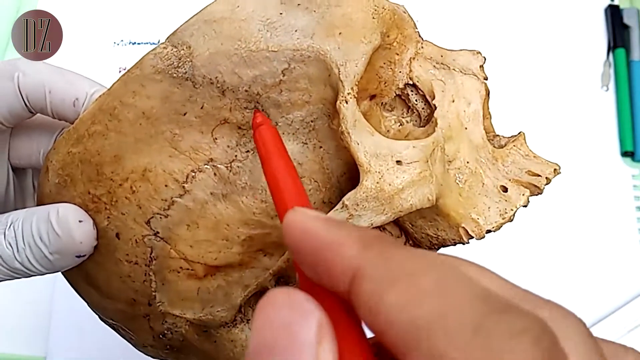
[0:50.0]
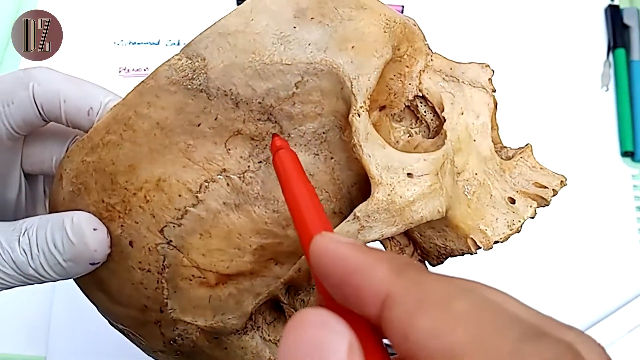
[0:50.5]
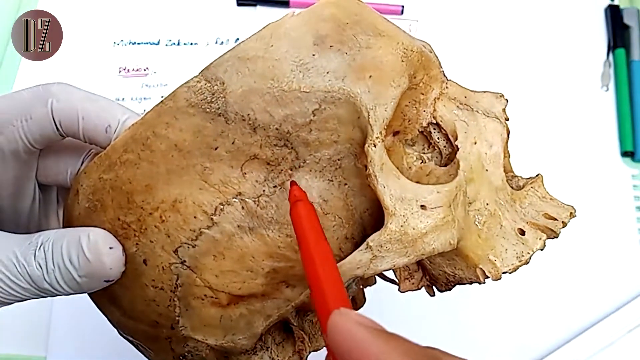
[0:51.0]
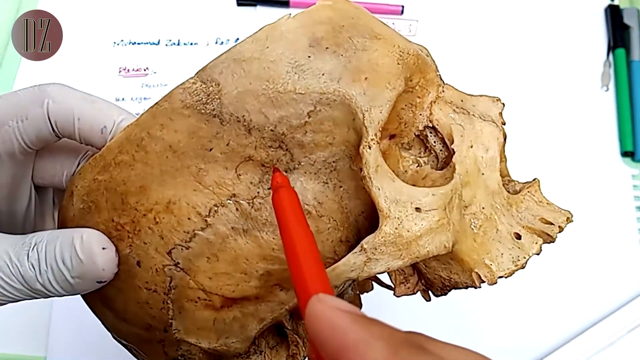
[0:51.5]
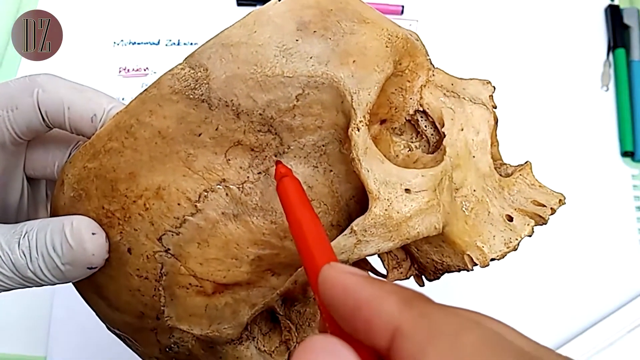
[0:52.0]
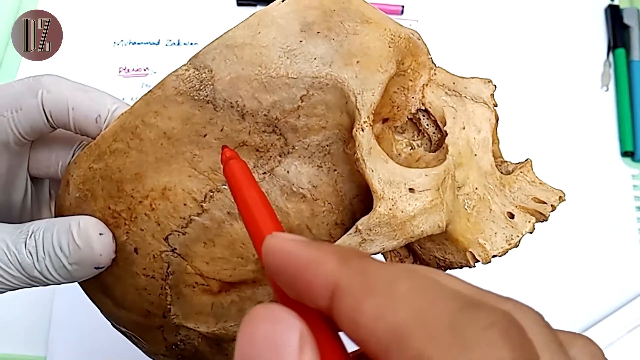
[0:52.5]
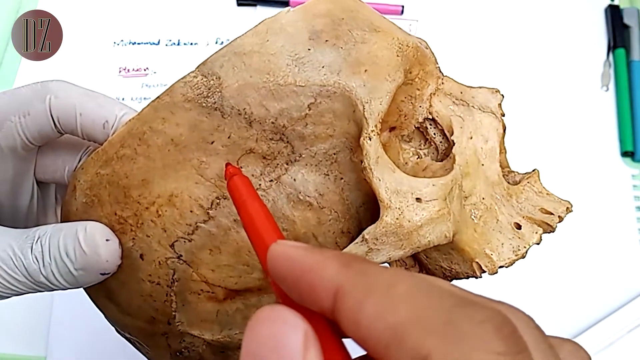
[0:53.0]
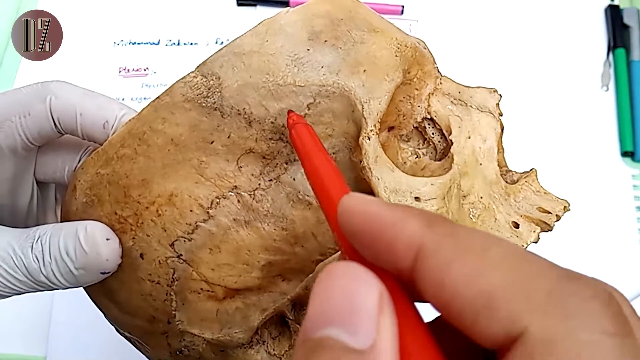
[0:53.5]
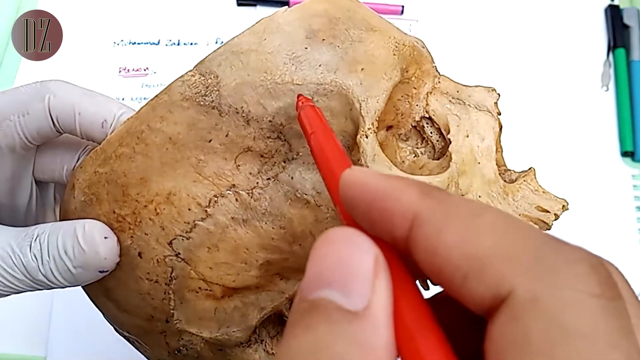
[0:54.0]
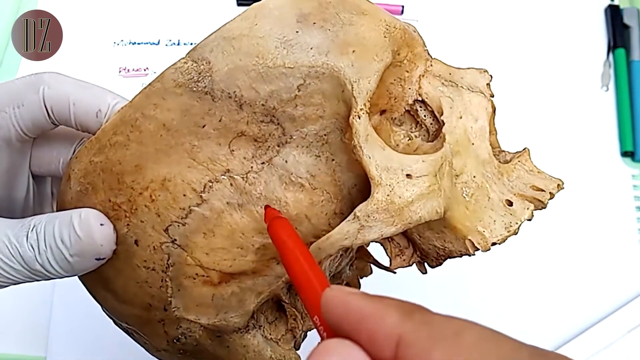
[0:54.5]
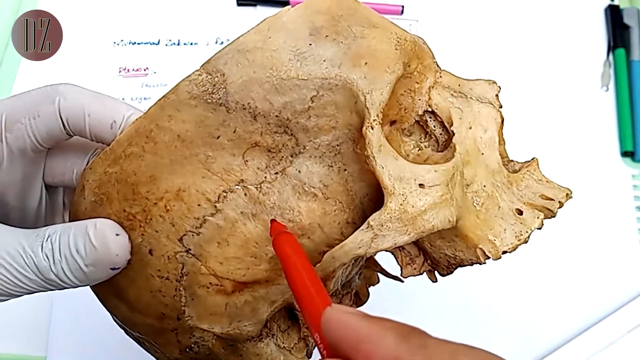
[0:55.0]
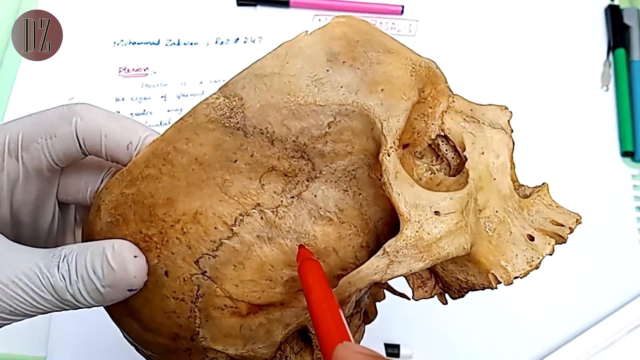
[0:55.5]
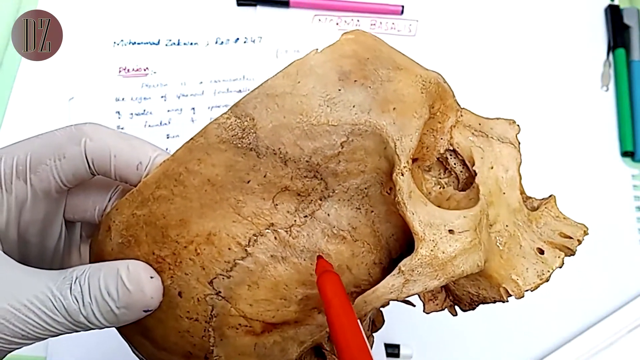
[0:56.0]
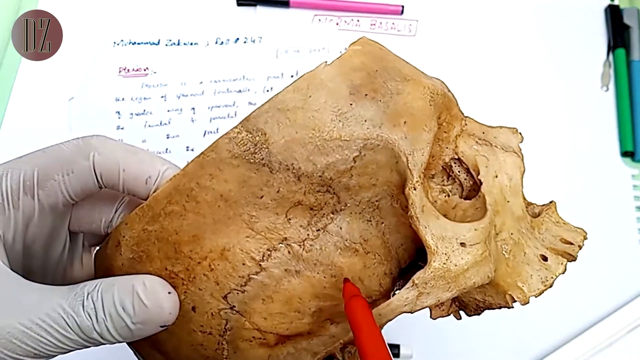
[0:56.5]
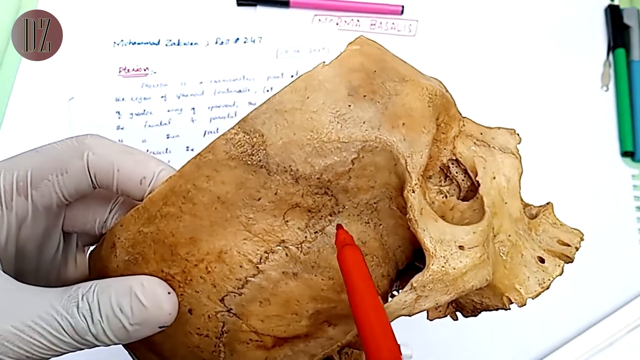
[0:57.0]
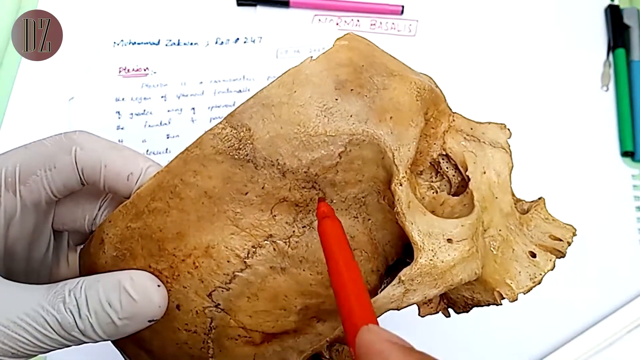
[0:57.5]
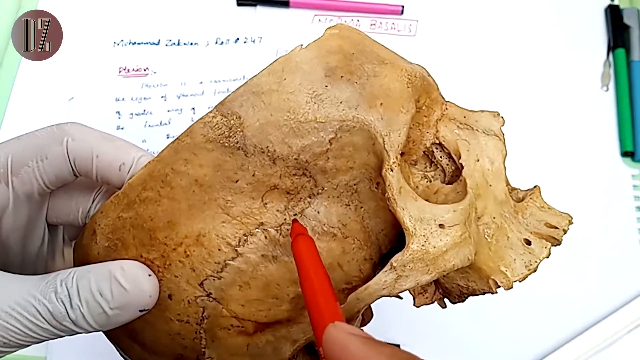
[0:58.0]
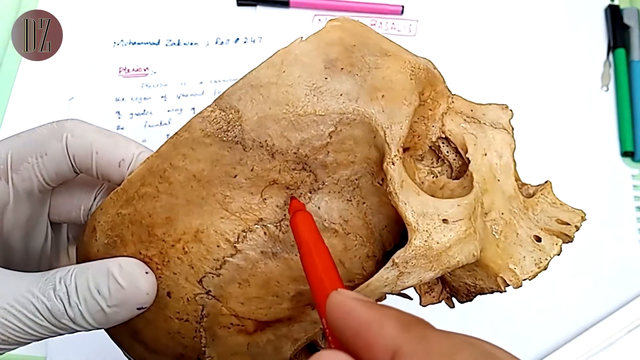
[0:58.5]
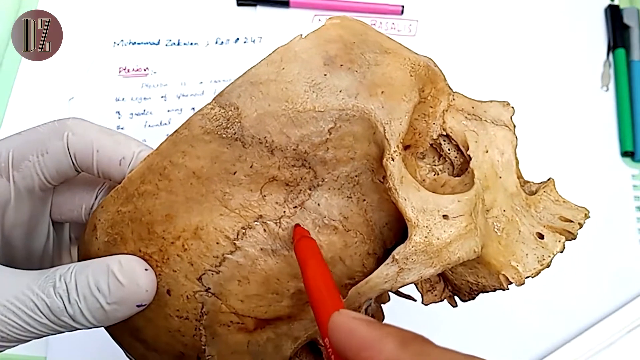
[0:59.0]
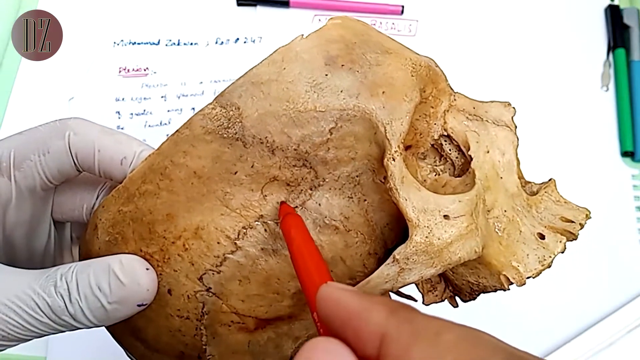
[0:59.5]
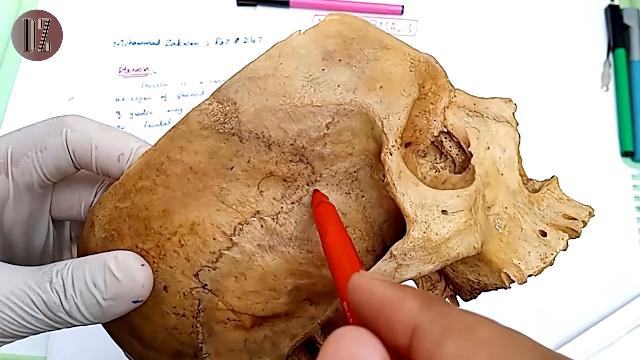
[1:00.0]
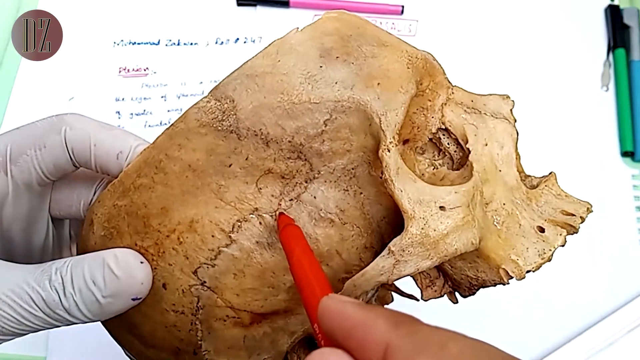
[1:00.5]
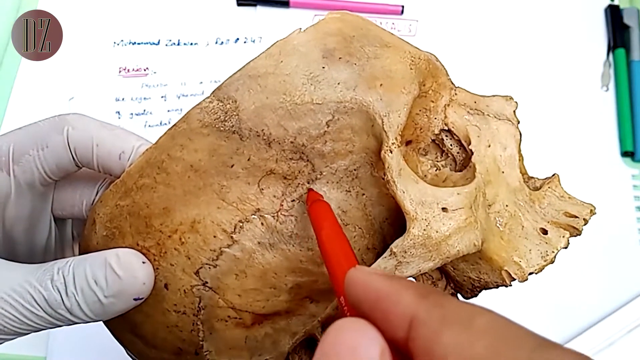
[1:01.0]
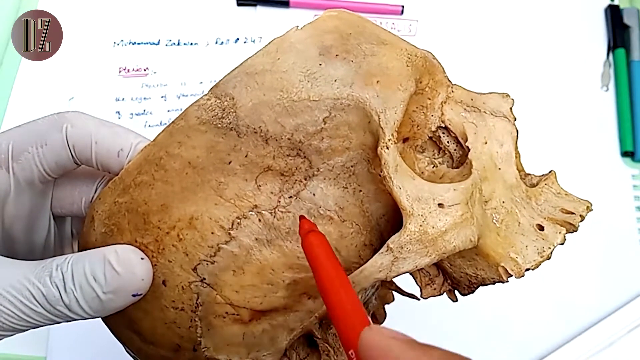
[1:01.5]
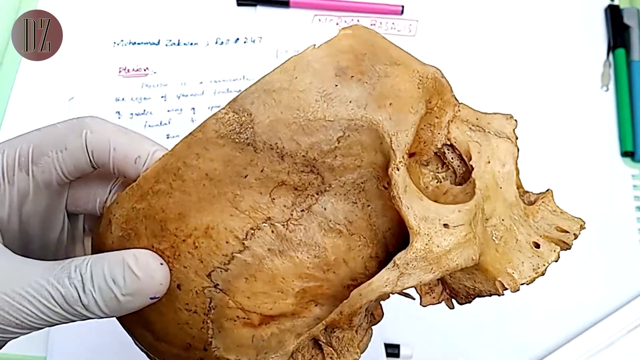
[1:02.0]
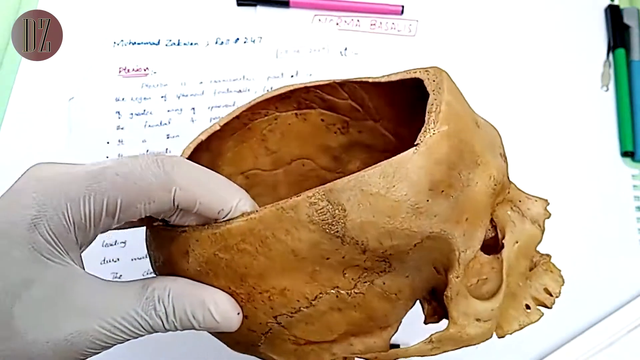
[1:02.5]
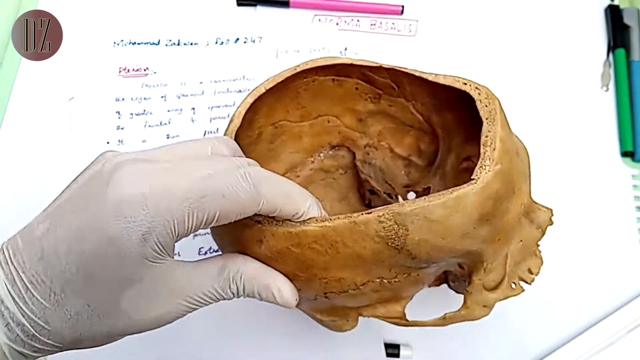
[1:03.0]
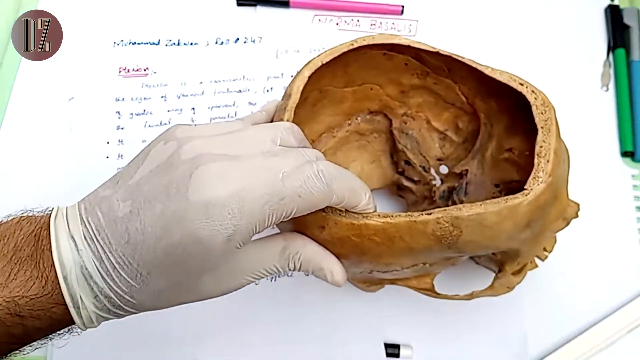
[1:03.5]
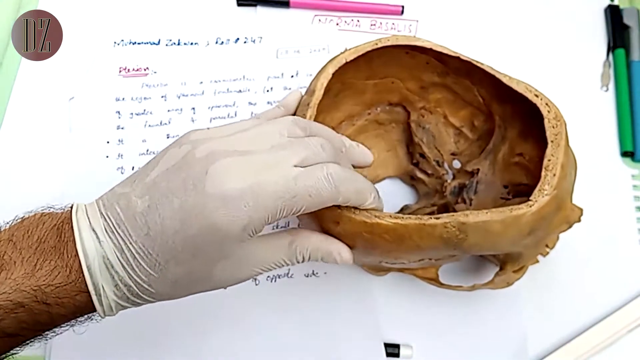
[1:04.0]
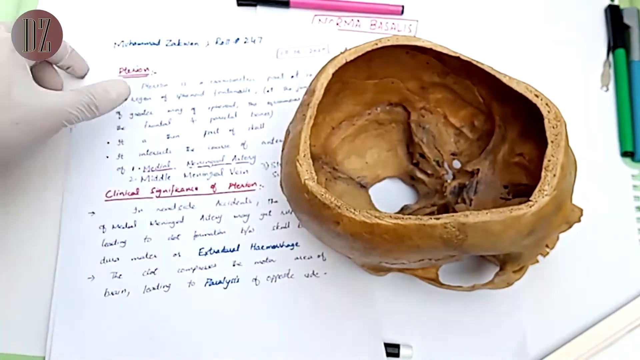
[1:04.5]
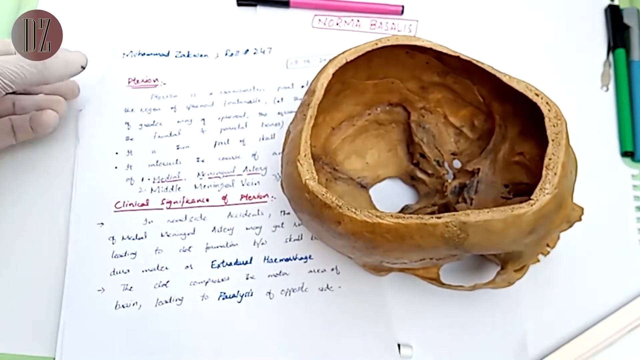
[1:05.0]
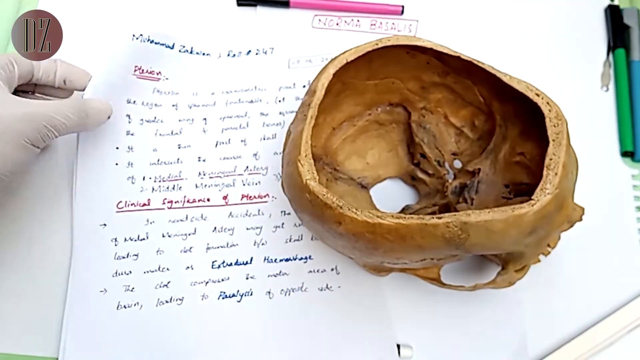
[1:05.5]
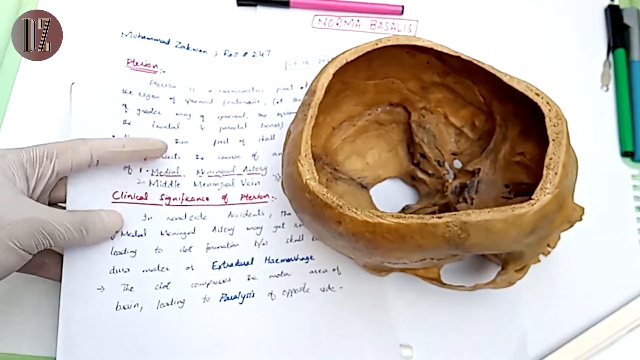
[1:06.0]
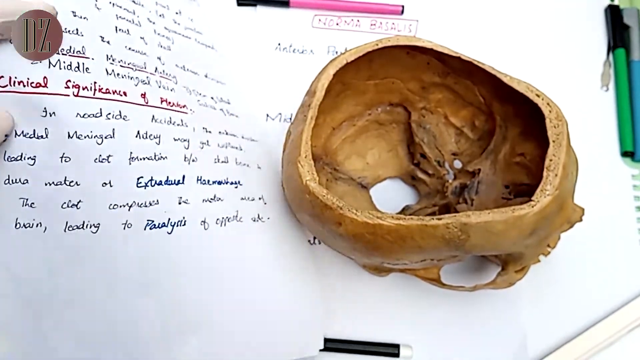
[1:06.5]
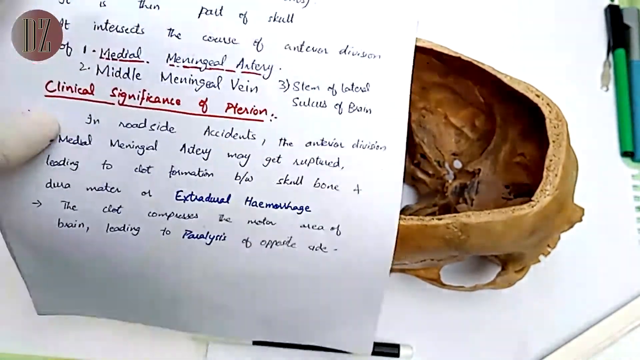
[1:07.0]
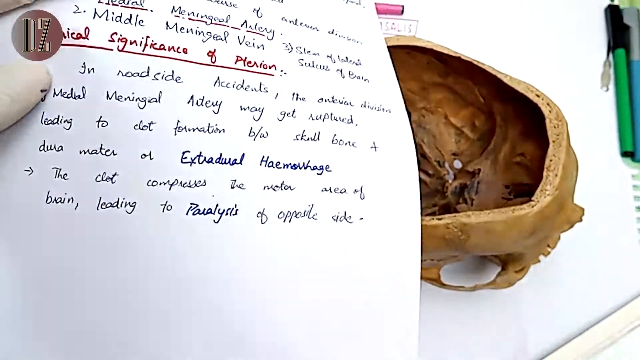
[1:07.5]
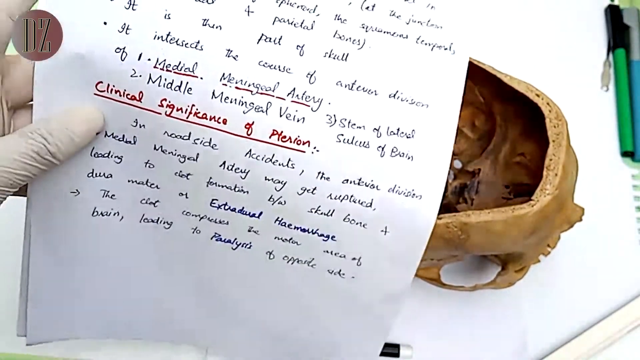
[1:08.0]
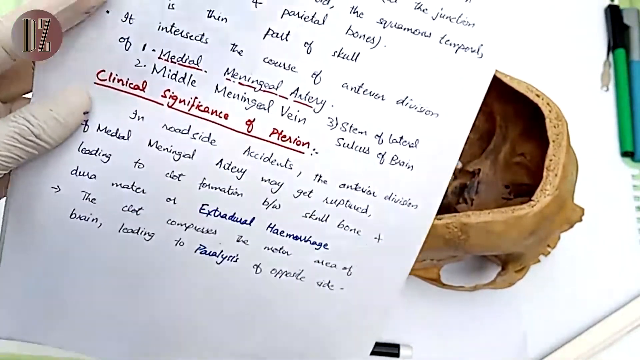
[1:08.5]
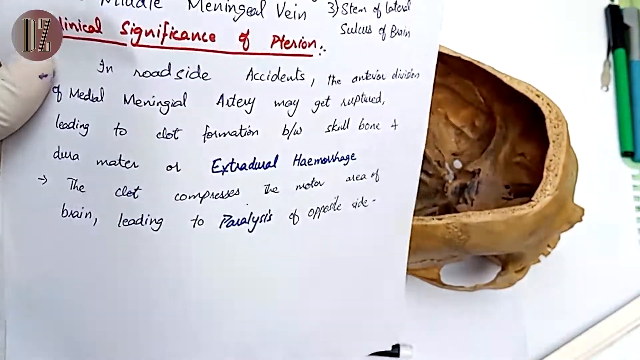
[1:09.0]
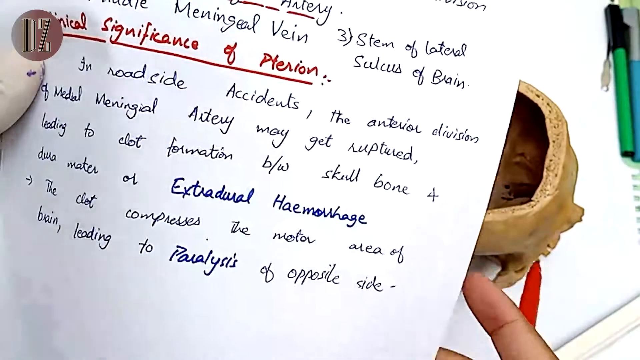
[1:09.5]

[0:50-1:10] A person's hands are visible: the left one wears a surgical glove, and the right one, with no glove, holds a red marker. The left hand grasps a human skull without its cap and without its lower jaw. The person uses the red marker to emphasize spots on the right temple of the skull with circular as well as side-to-side movements. They then pick up a sheet of paper with black pen writing and red marker writing, in a mix of cursive and print. In the upper left corner of the video is a logo that looks like a coin, like a penny, copper-colored or pewter, with the capital letters DZ within it.